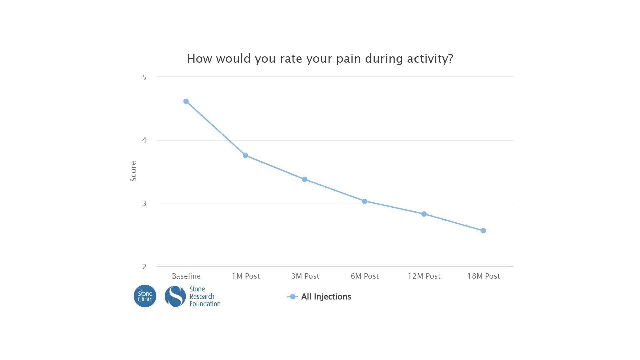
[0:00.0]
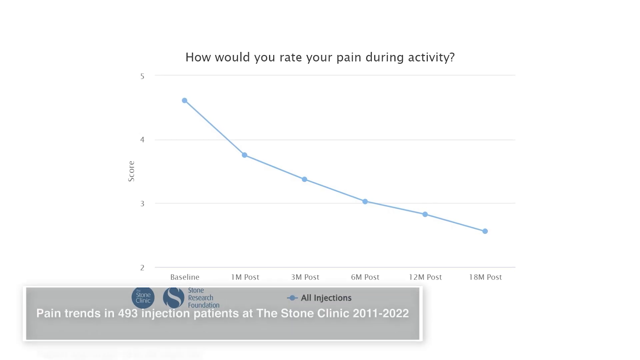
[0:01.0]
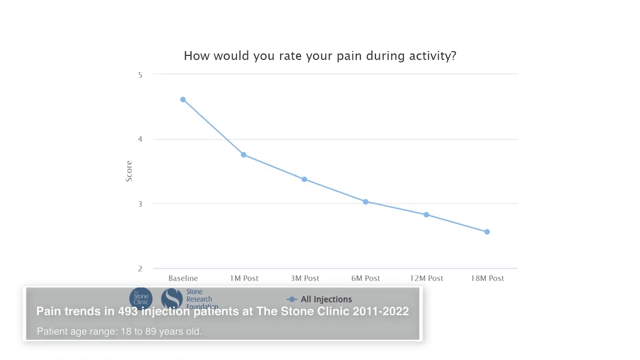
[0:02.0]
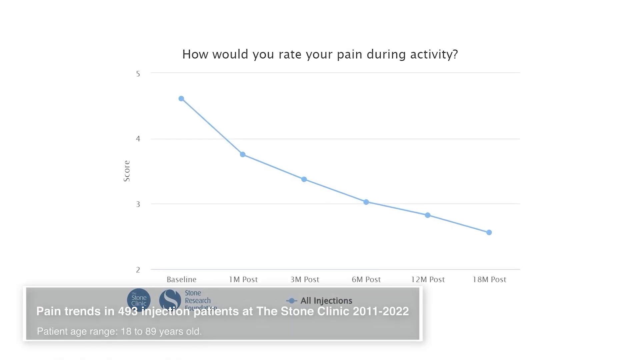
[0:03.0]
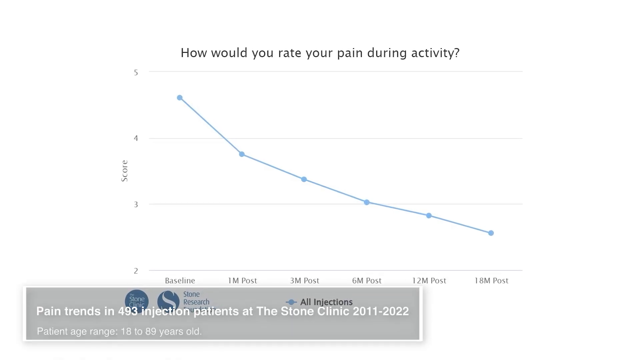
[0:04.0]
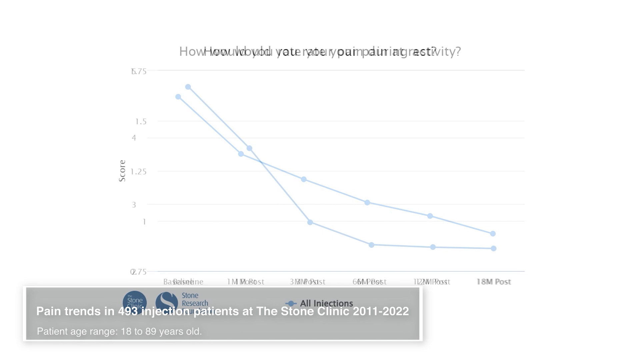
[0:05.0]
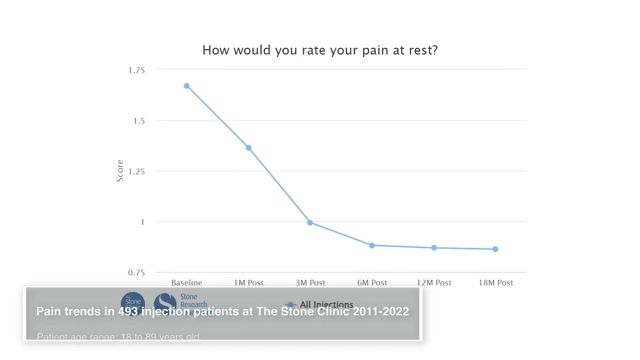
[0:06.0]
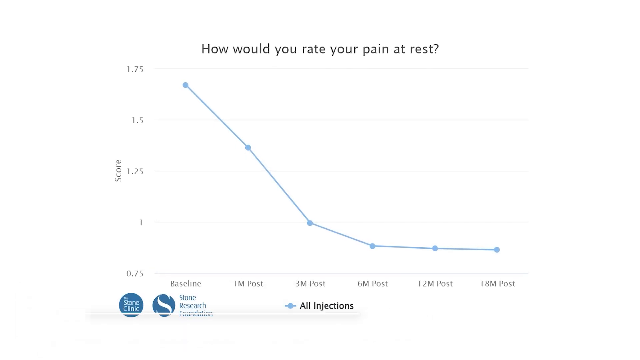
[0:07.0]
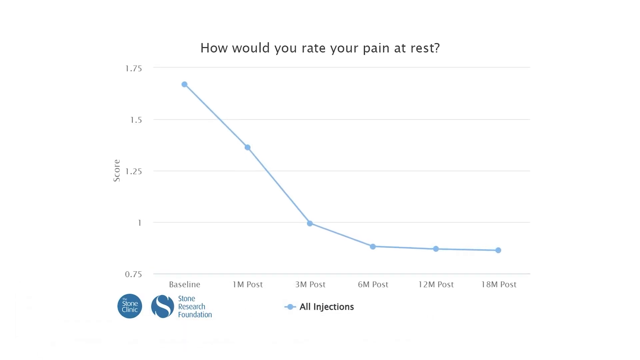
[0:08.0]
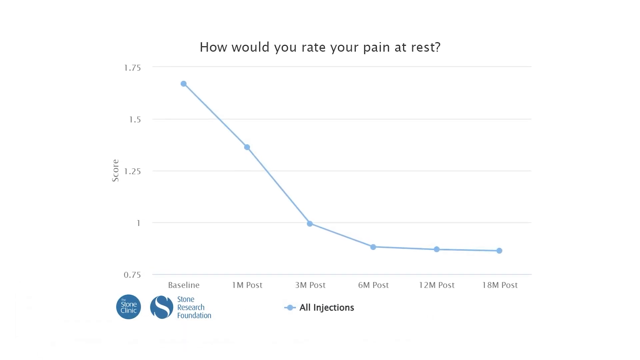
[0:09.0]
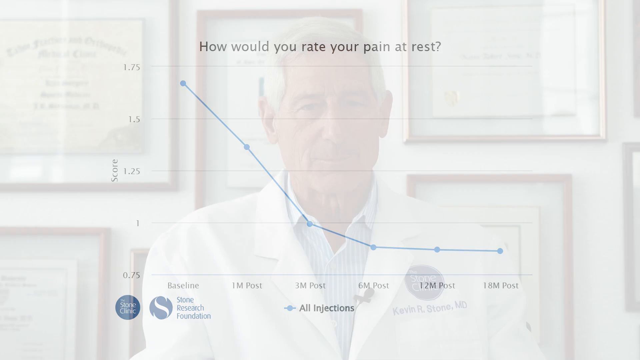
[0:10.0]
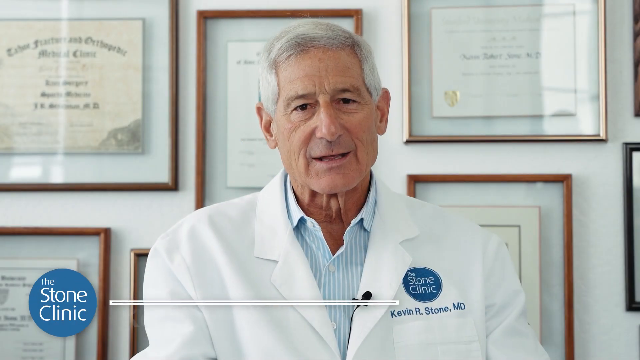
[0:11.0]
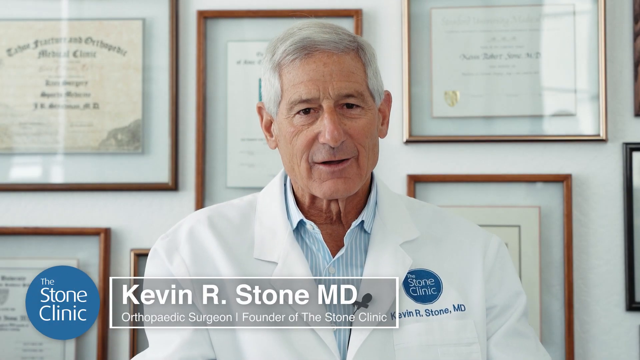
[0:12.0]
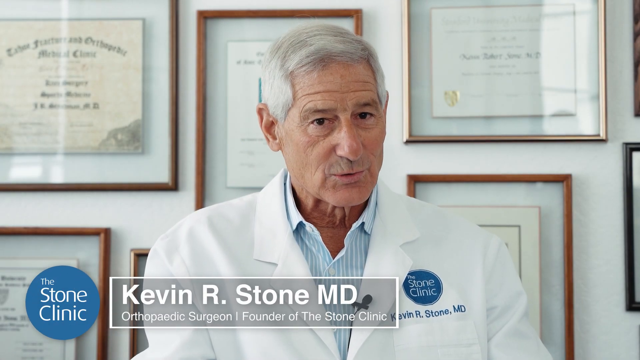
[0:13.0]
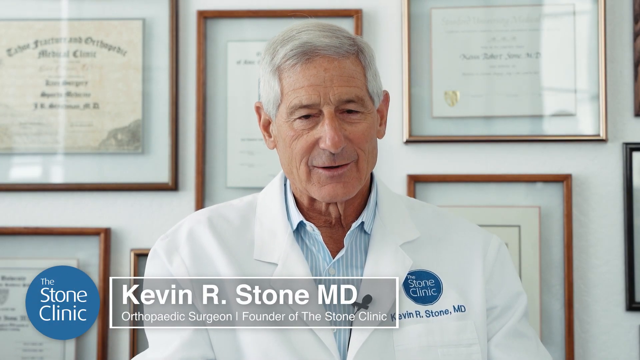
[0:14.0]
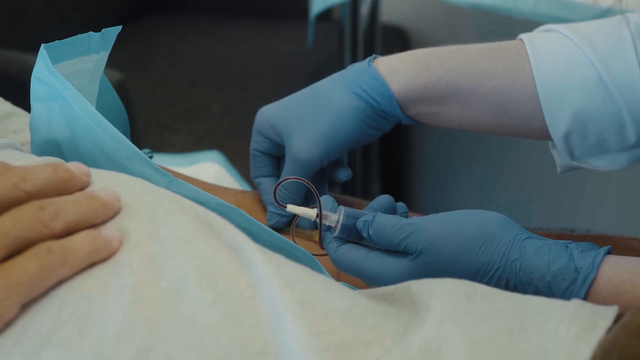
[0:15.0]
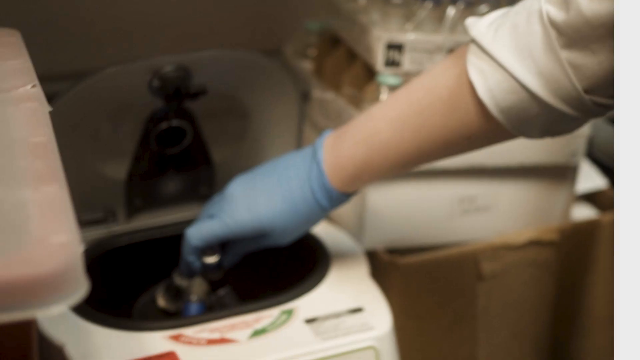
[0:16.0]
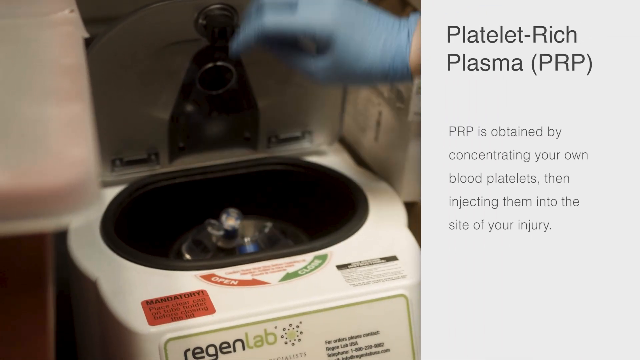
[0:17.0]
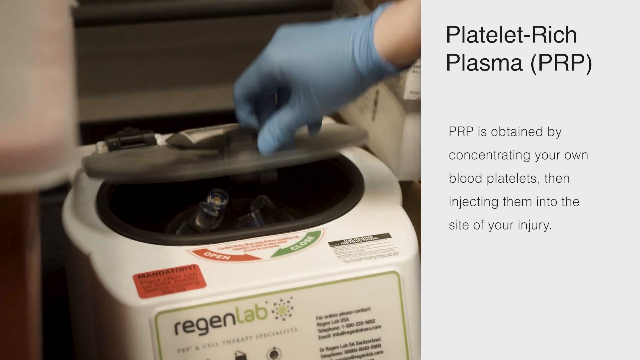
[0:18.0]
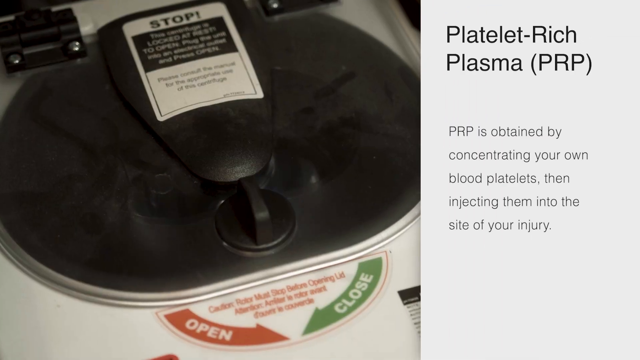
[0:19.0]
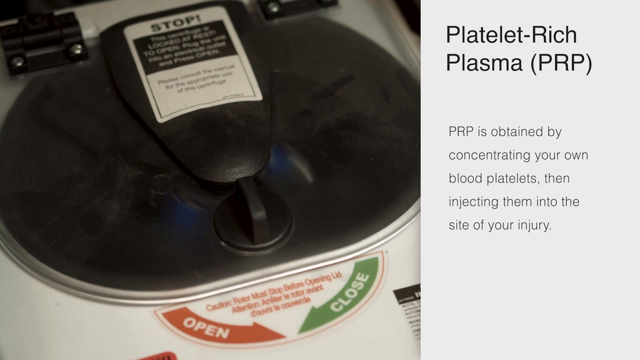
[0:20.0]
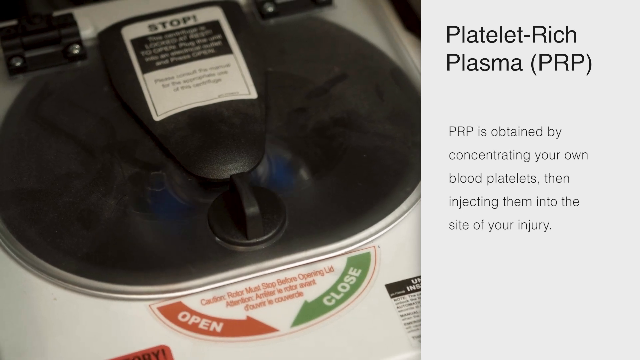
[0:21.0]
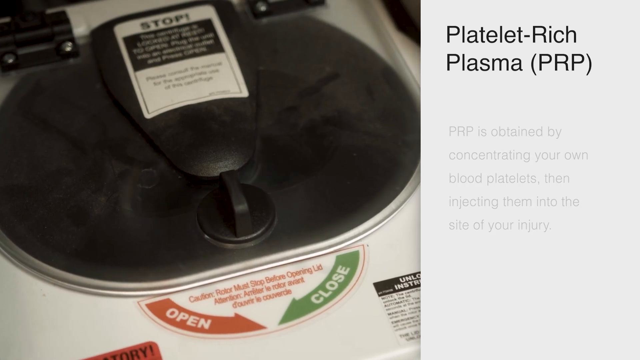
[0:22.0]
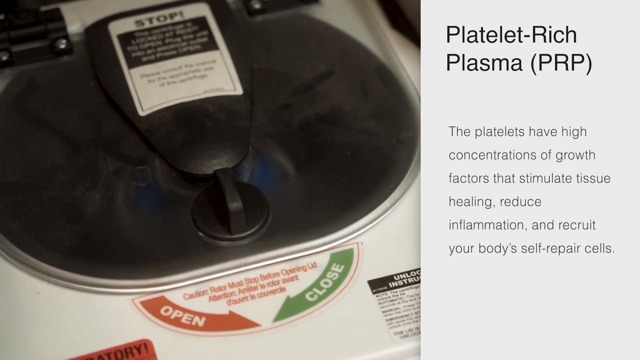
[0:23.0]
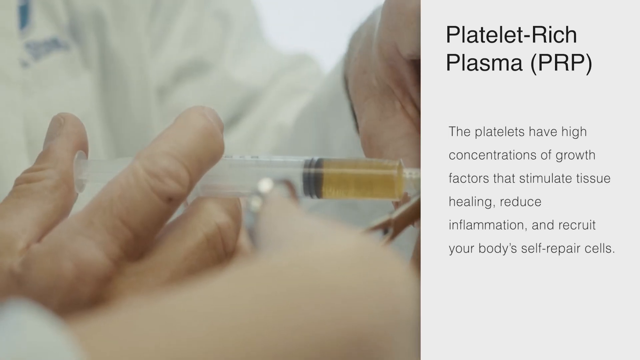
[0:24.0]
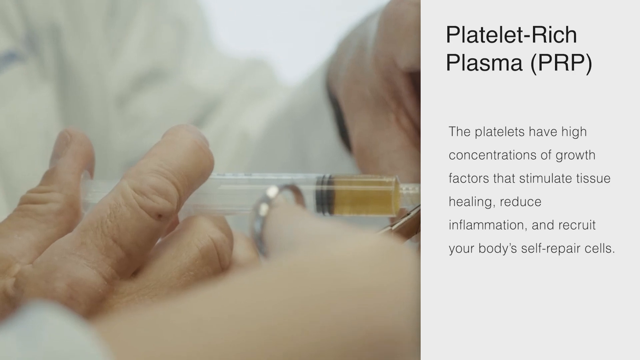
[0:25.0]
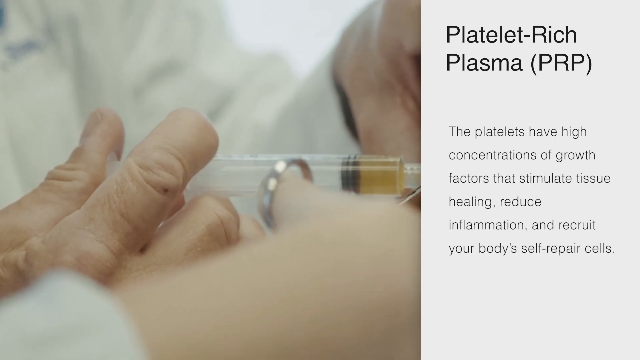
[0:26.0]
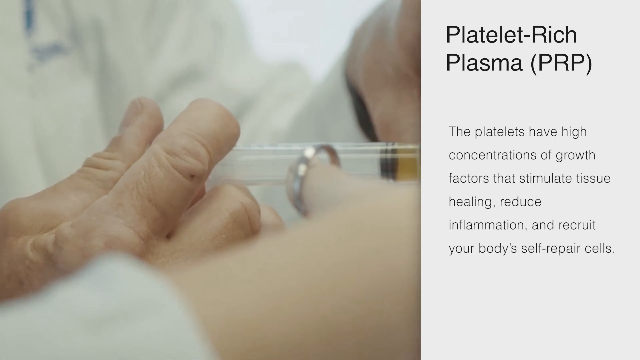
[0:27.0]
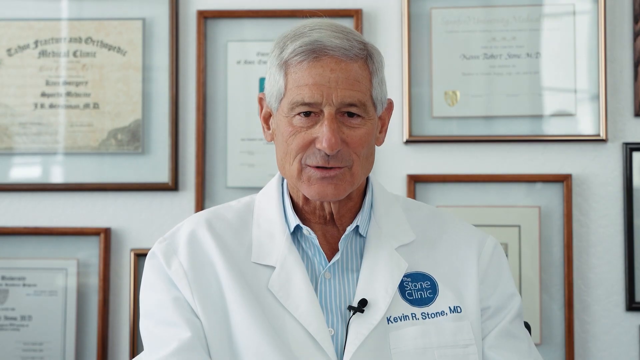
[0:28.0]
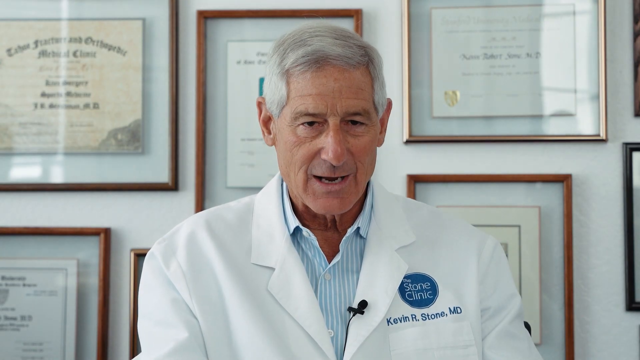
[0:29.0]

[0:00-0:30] The video opens on a graph. The vertical axis on the left side runs from a score of 2 at the bottom to 5 at the top, and the horizontal baseline runs from 1 month post to 18 months post, possibly referring to time after some kind of operation. The heading of the graph reads "how would you rate your pain during activity", and the graph also marks points where injections were given. It is presented by the Stone Research Foundation, part of the Stone Clinic. Text then appears at the bottom of the screen: "Pain trends in 493 injection patients at the Stone Clinic from 2011 to 2022", with the patients' ages ranging from 18 to 89. The video then cuts to Dr. Kevin Stone being interviewed.